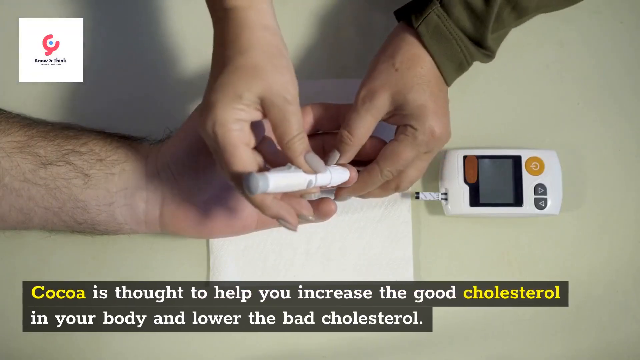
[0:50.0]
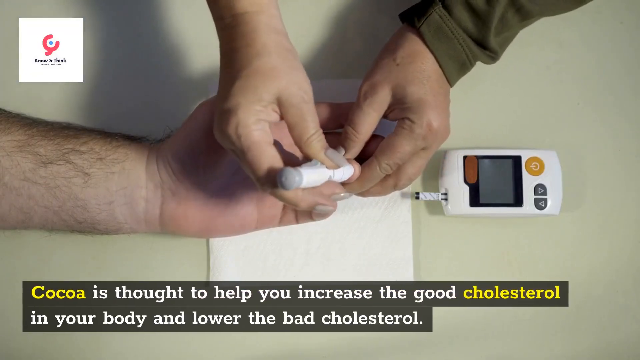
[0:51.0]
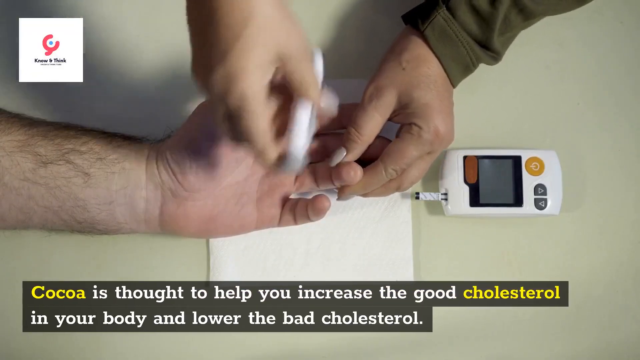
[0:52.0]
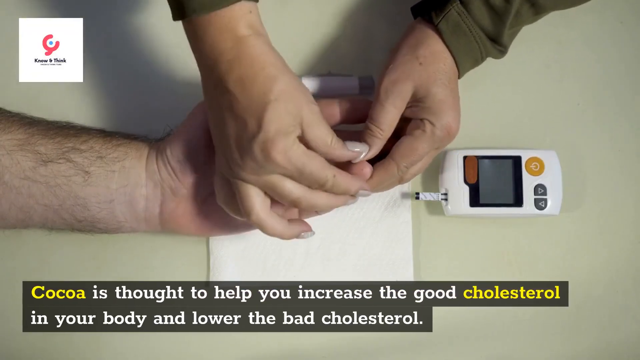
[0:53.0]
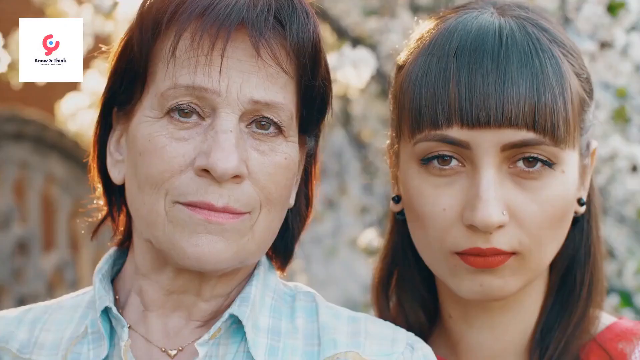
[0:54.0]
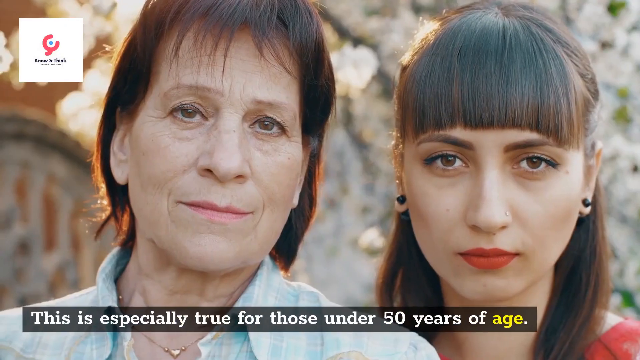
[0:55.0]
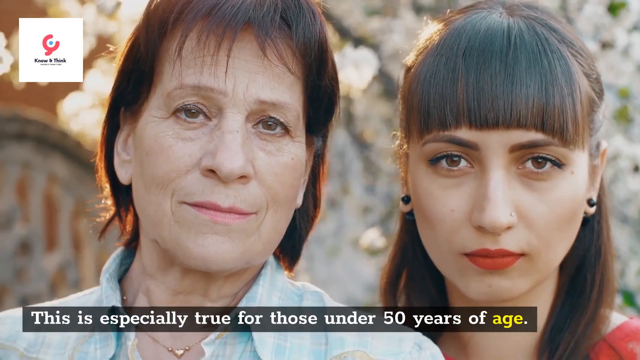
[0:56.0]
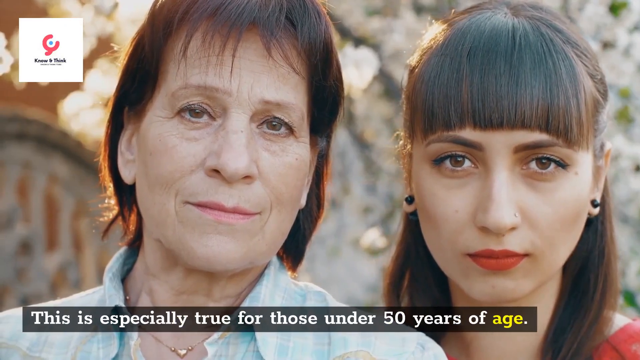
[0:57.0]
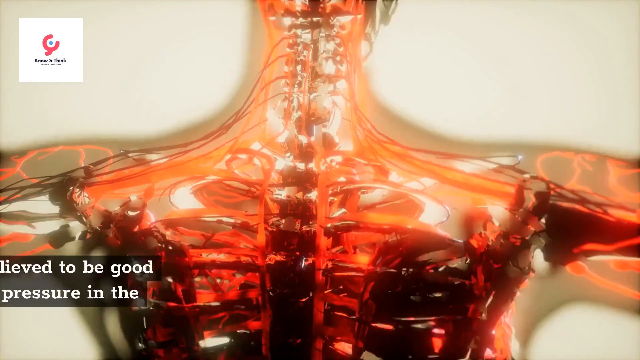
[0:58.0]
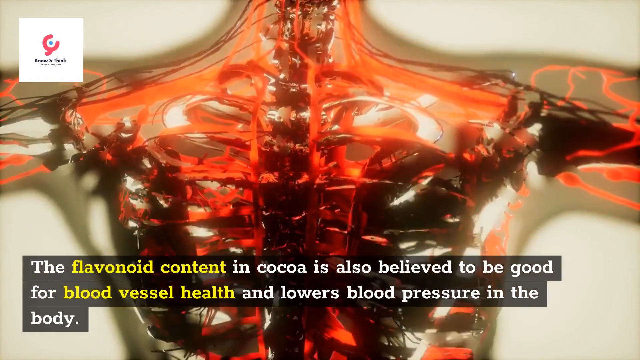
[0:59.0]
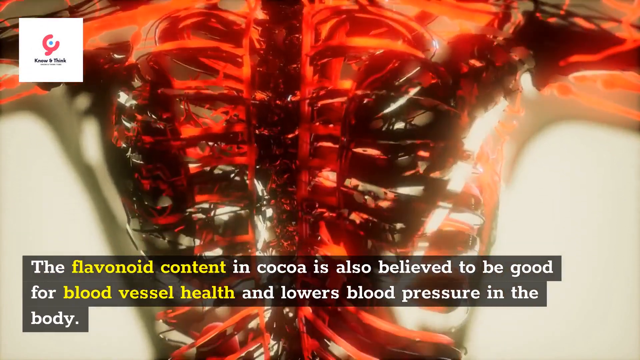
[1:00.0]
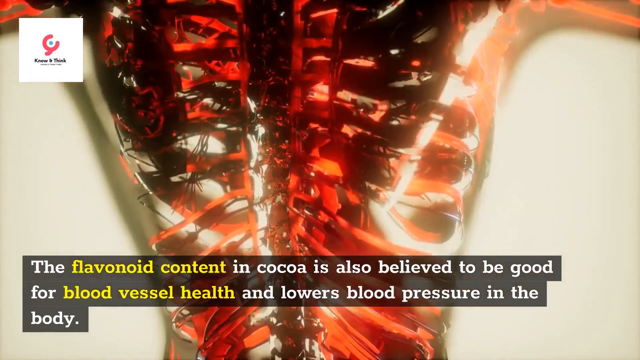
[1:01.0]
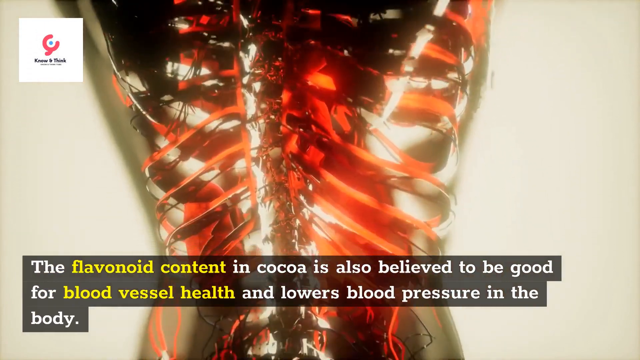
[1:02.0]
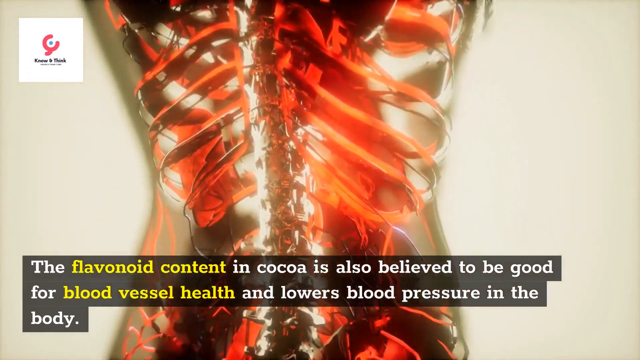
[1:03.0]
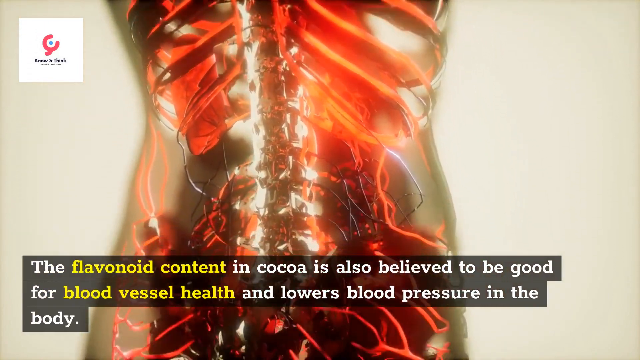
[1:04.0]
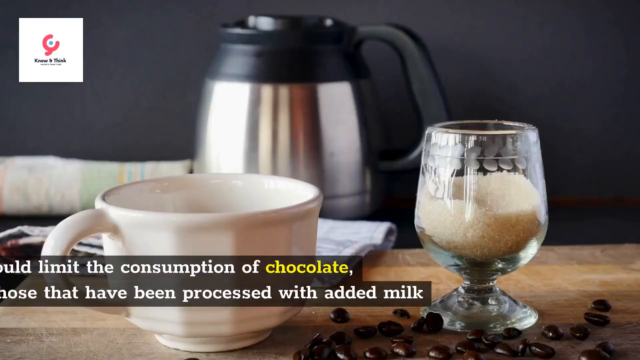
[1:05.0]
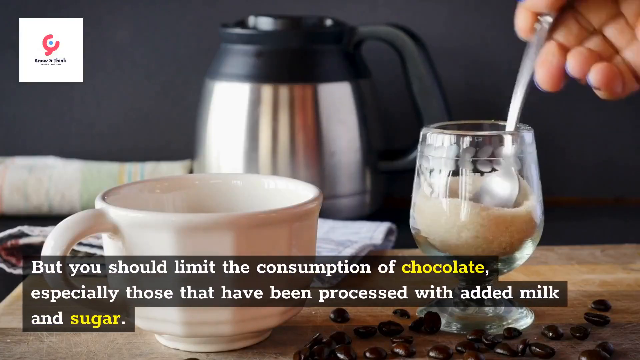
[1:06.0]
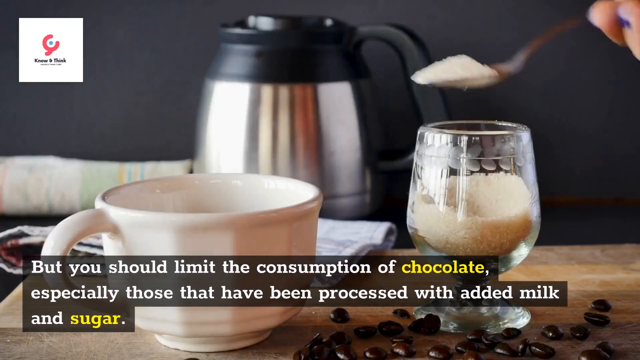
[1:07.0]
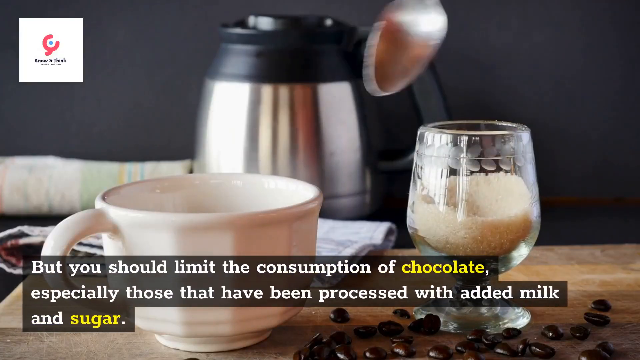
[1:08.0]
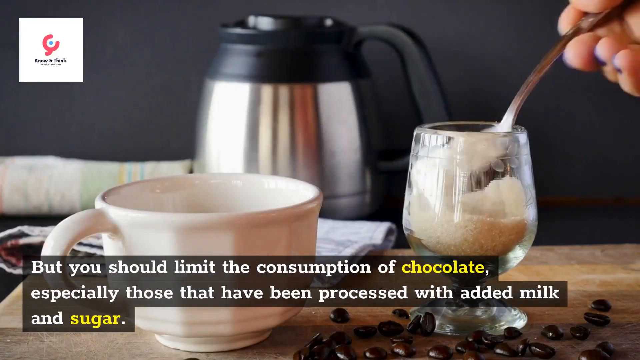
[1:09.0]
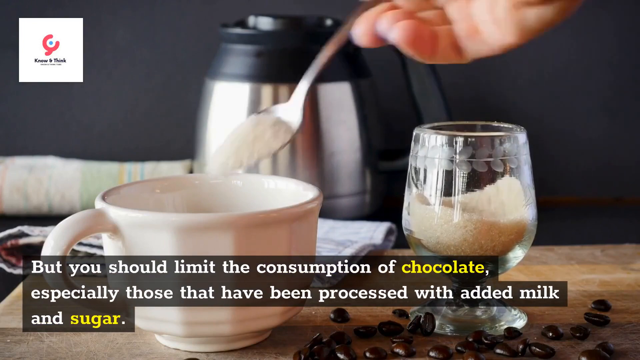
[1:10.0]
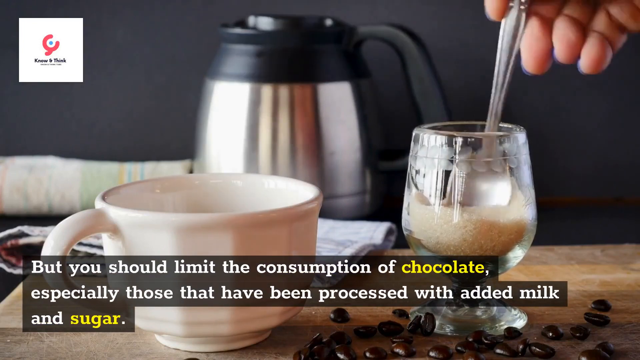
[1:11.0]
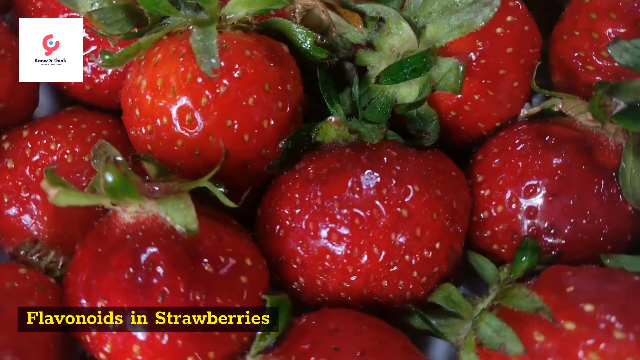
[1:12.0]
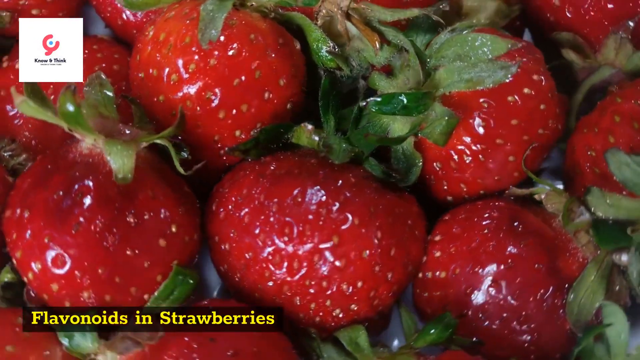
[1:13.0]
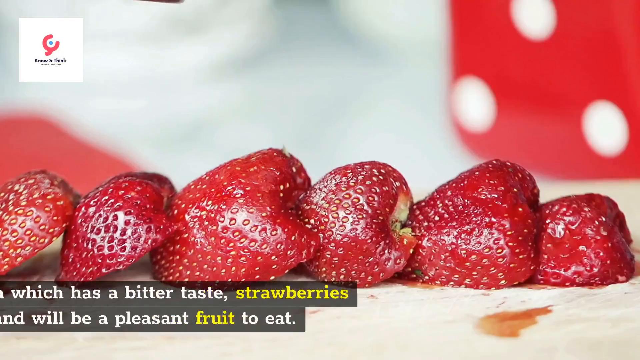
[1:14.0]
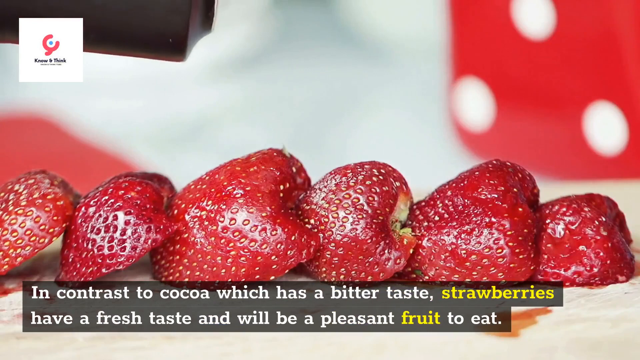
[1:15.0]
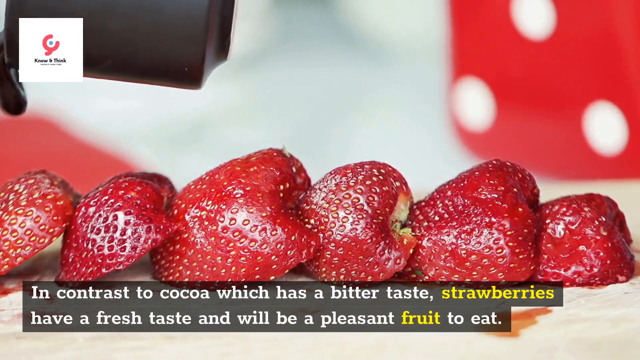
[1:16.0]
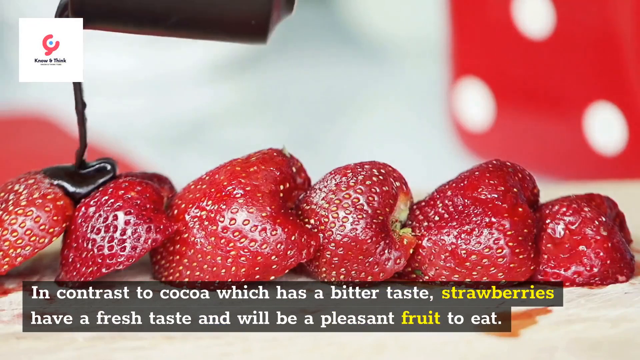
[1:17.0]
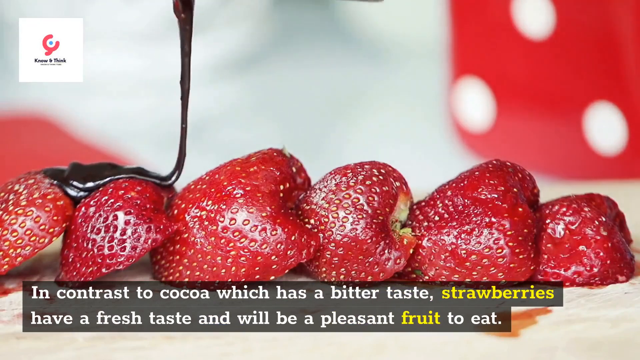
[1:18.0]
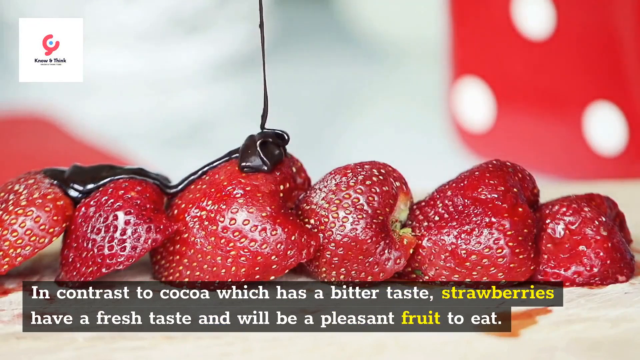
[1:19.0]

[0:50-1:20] One person is being tested by another: a pair of hands uses a tool to prick the other person's fingers and then squeezes blood out. An infographic at the bottom states that cocoa is thought to help increase the good cholesterol in your body. After a transition, a close-up shows the faces of two women in an outdoor setting; one looks to be older than the other, and both have dark brunette hair and a light shade of lipstick. Next, a CGI body shows the inner parts of the blood vessels and circulatory system, with an infographic stating that flavonoid-content cocoa is thought to be good for blood vessel health and lowers blood pressure in the body. The camera pans down to show the entire circulatory system. The scene then transitions to a kettle in front of a porcelain cup, with sugar being spooned into the cup. A final transition shows a close-up of strawberries, with text that mentions cocoa having a bitter taste.